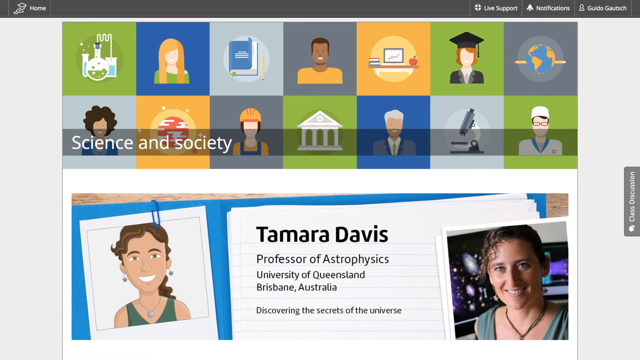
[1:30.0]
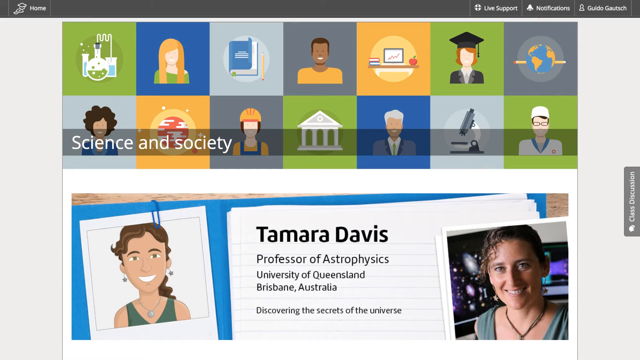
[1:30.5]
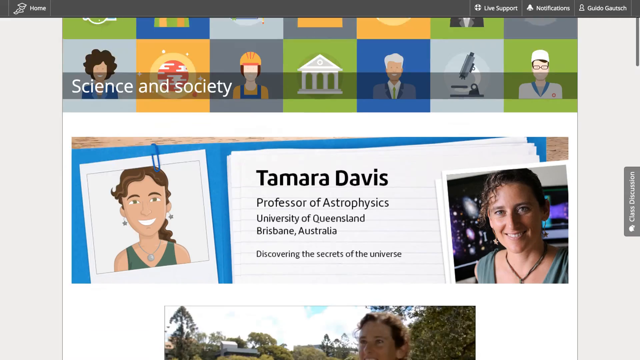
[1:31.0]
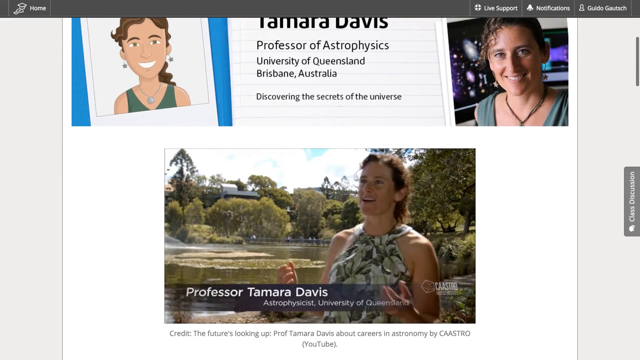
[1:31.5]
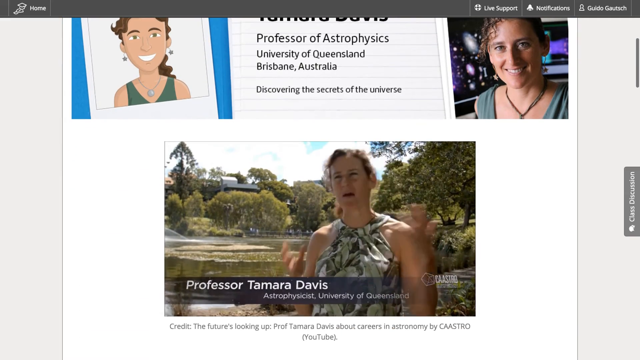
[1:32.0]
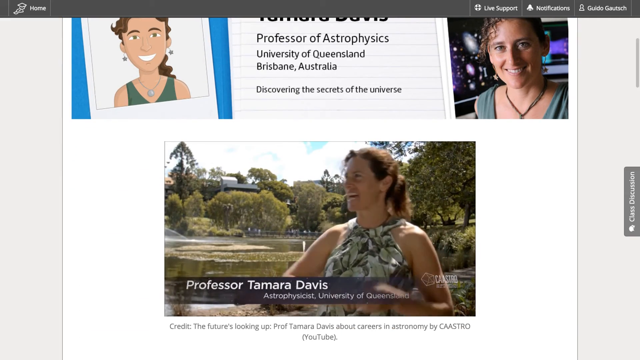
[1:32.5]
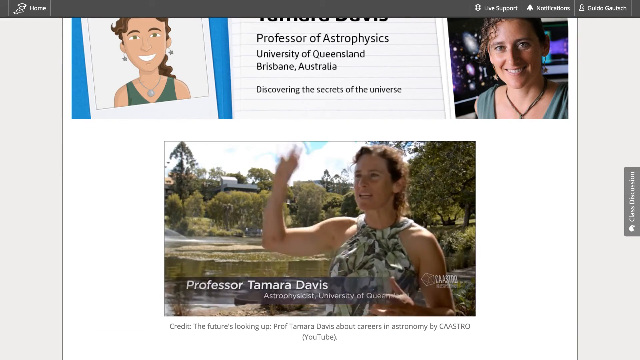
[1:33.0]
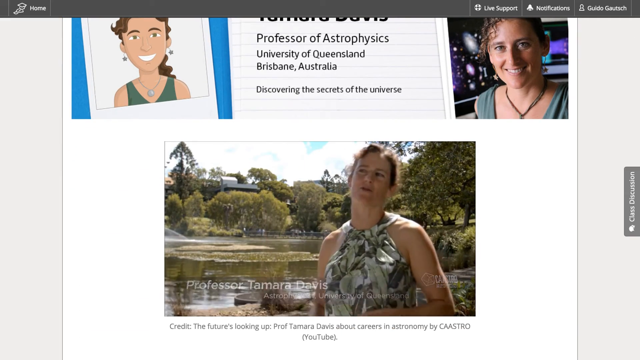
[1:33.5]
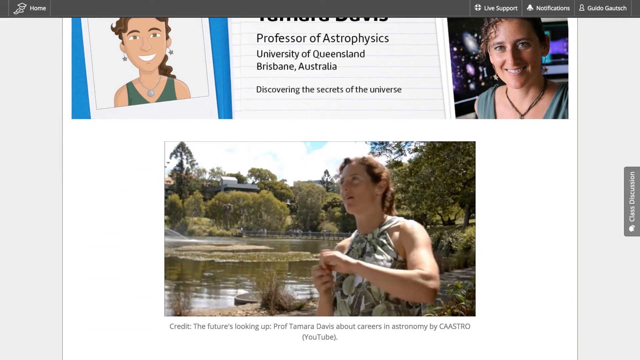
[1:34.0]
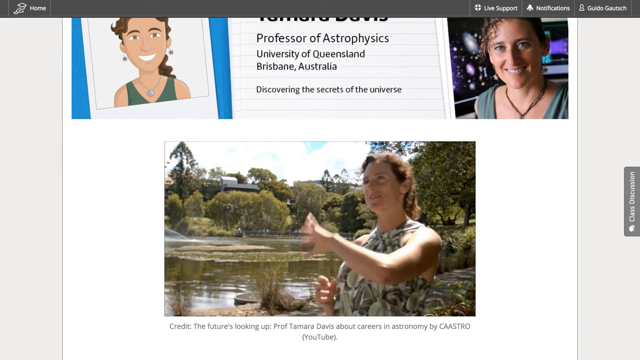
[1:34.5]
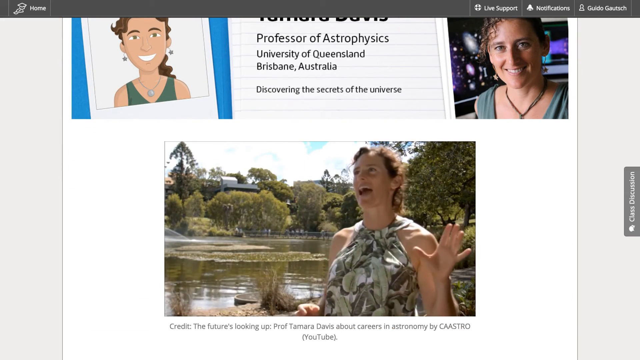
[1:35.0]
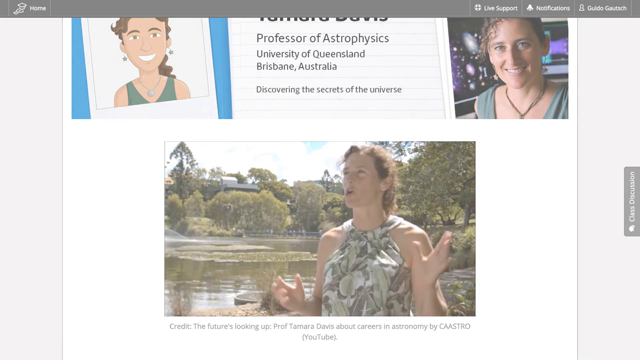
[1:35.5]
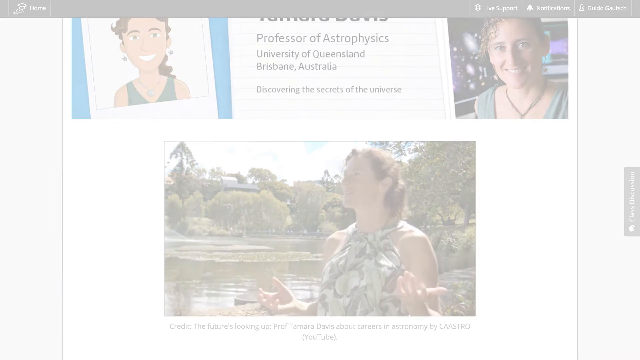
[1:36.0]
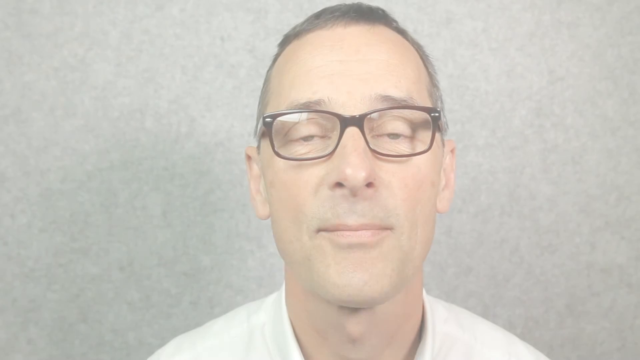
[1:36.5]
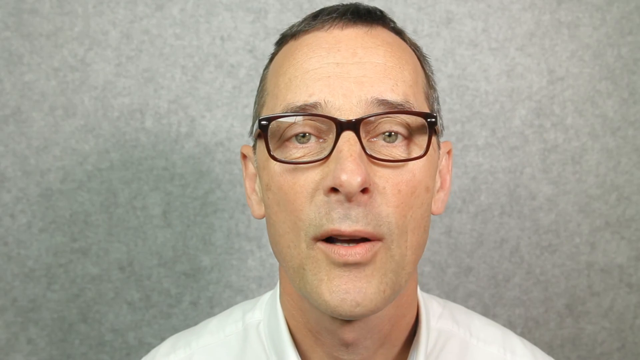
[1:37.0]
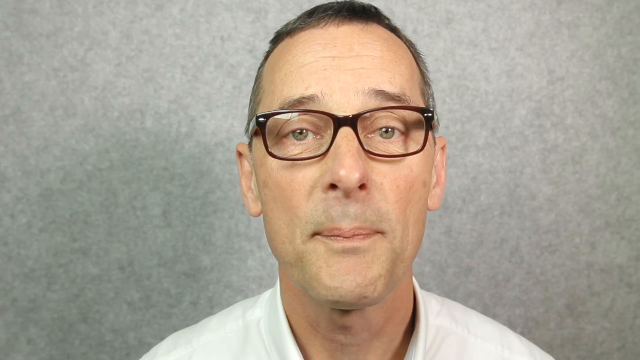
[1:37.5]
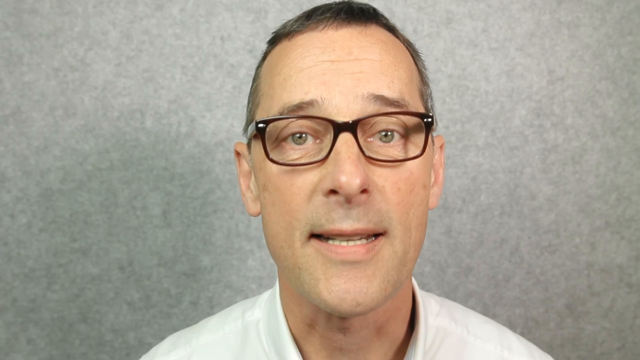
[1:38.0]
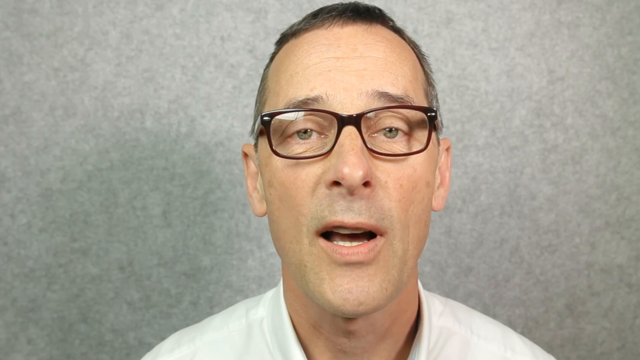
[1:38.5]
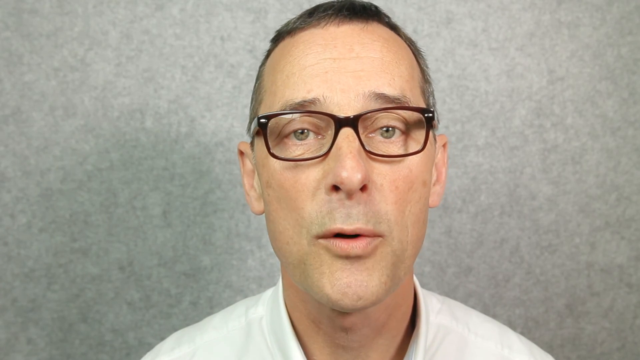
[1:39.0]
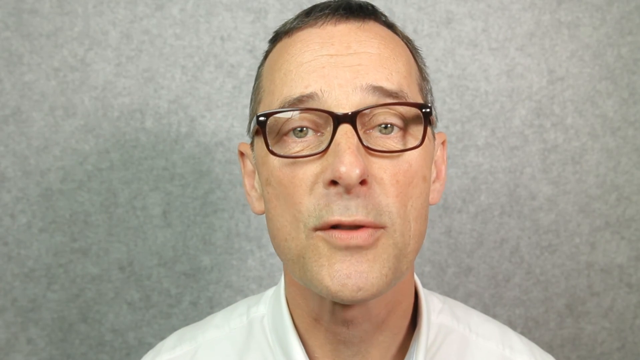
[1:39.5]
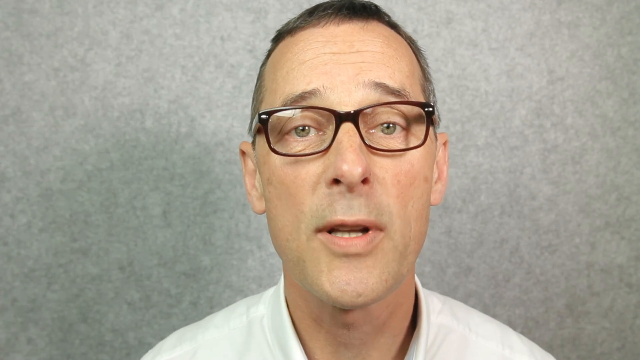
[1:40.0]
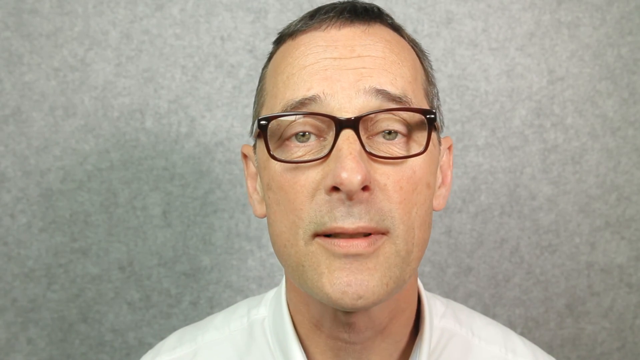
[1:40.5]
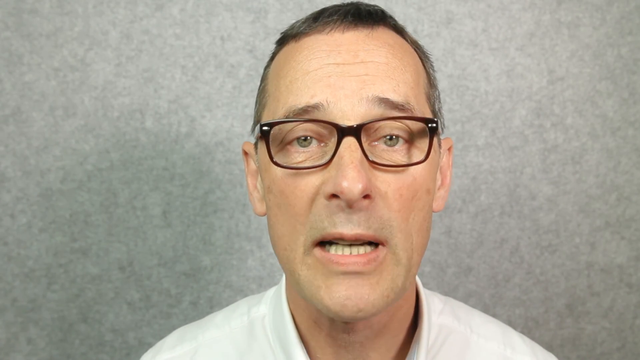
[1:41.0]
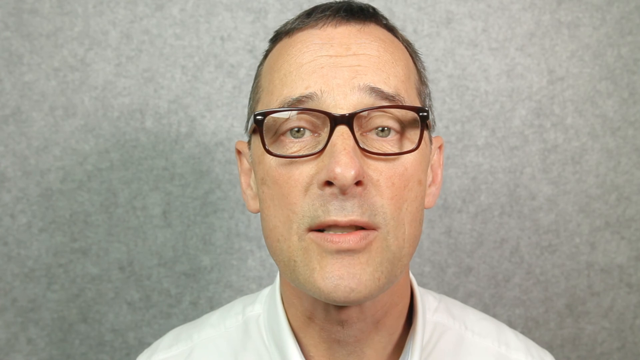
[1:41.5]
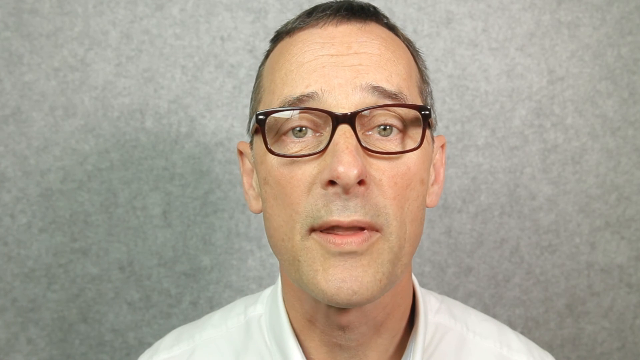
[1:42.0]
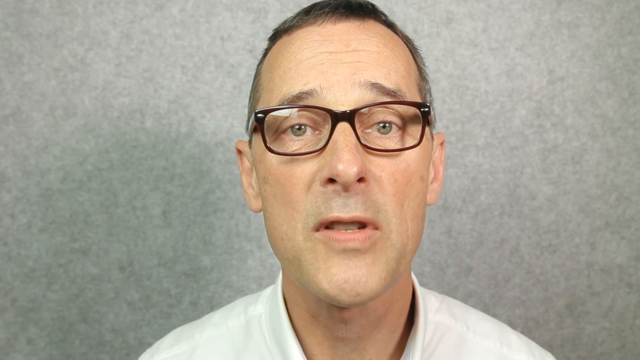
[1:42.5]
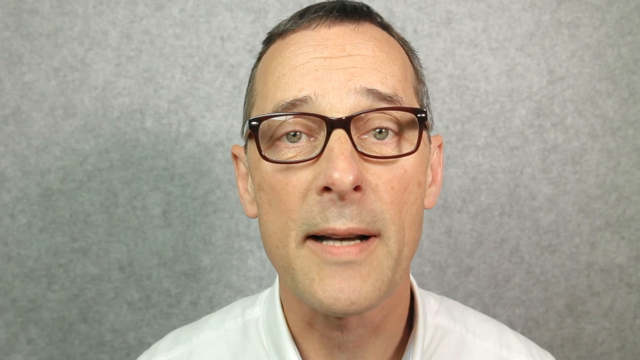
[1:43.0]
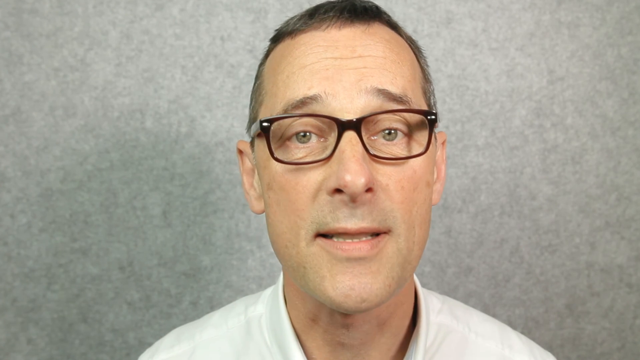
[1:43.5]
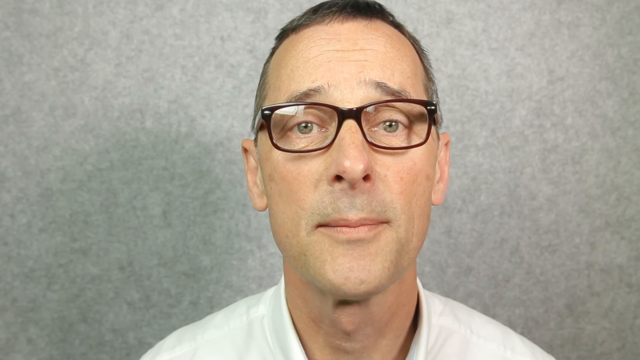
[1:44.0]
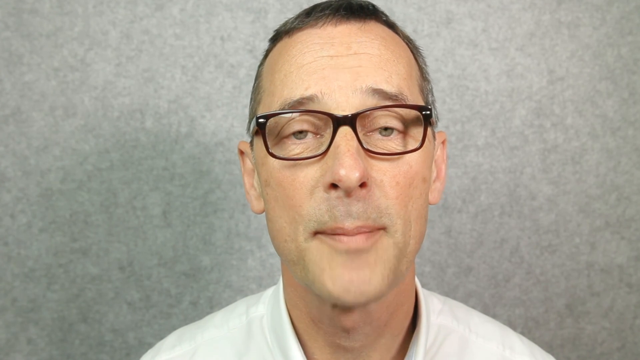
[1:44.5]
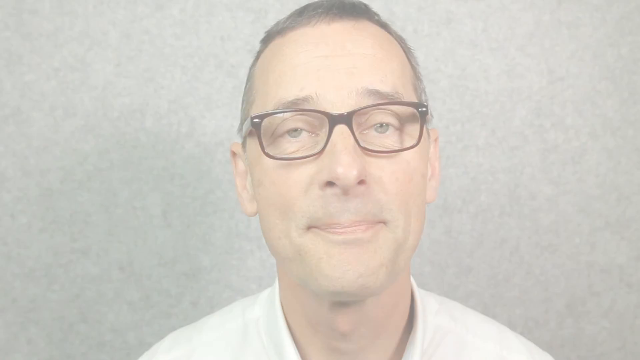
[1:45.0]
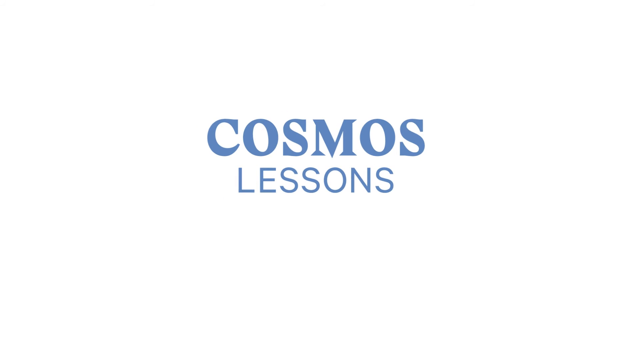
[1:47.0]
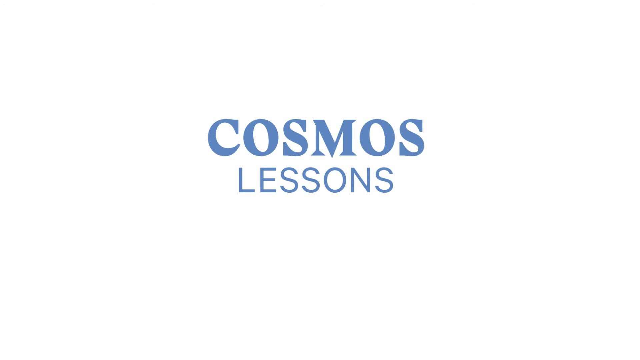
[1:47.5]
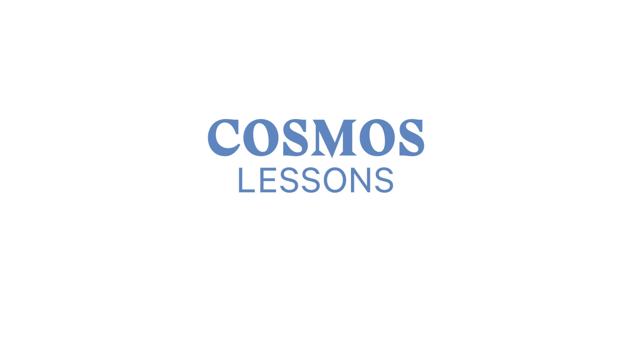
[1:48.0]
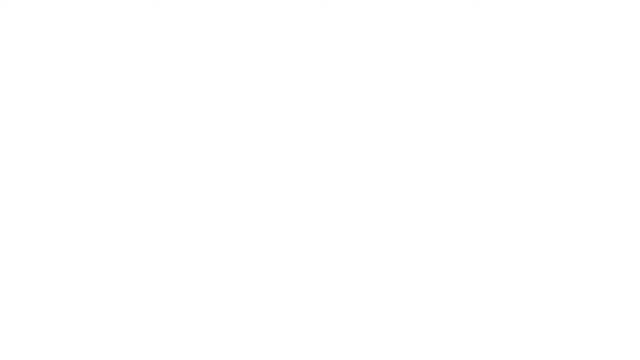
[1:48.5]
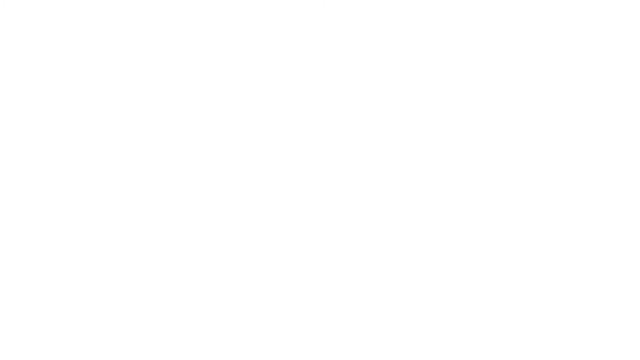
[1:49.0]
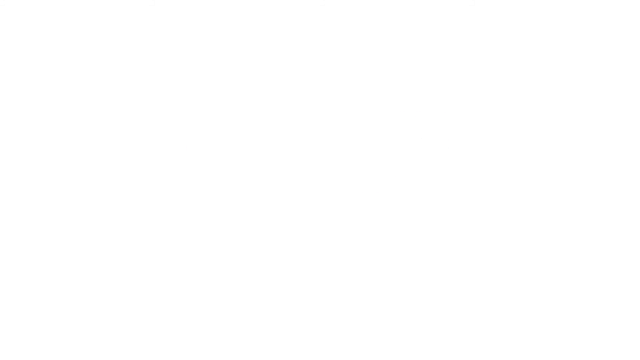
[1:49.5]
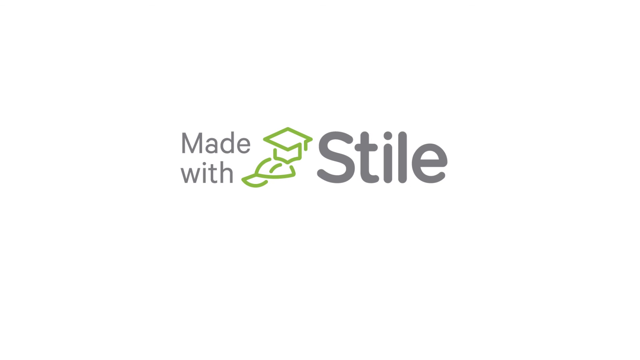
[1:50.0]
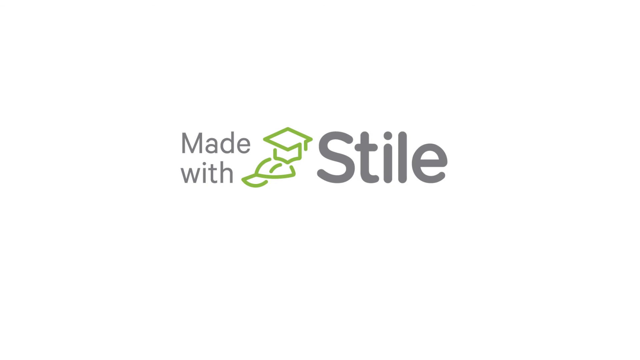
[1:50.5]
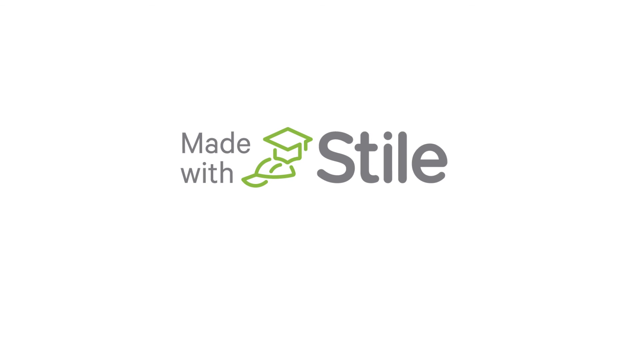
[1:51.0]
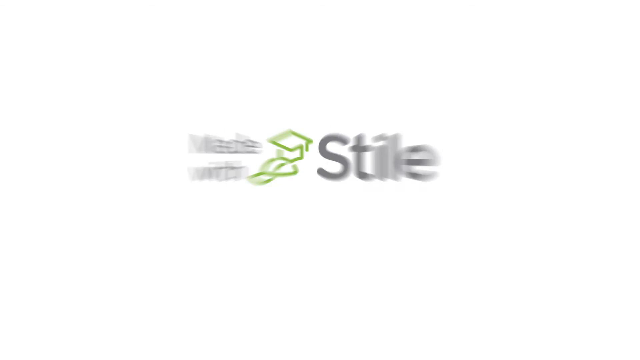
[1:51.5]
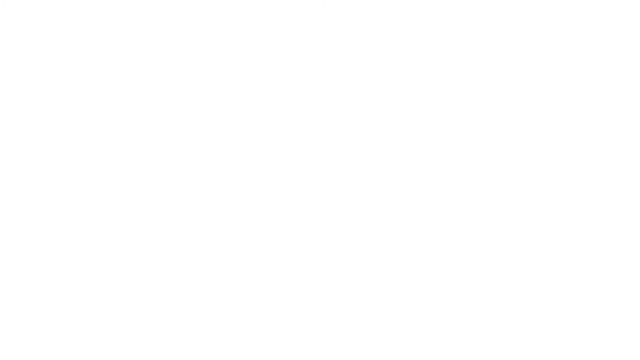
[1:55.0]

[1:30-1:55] Tamara Davis appears in a video explaining something about astronomy; she is shown as a professor of astrophysics from the University of Queensland in Brisbane, Australia. The video then returns to the professor, who explains more. At the end, the title, cosmos lessons, appears, followed by "Made with stile," with stile spelled S-T-I-L-E.